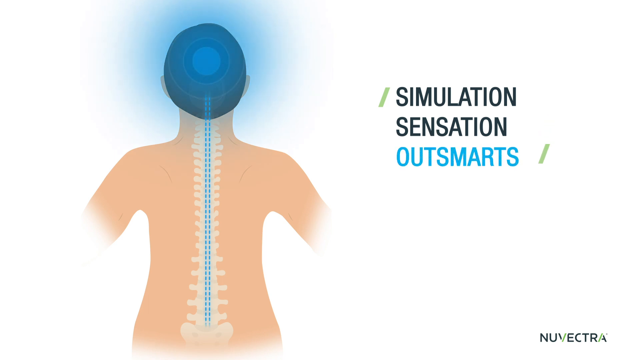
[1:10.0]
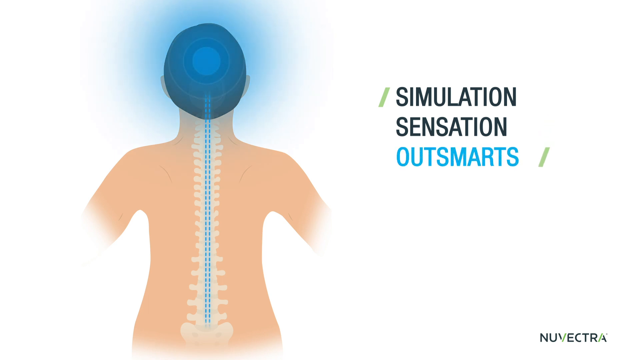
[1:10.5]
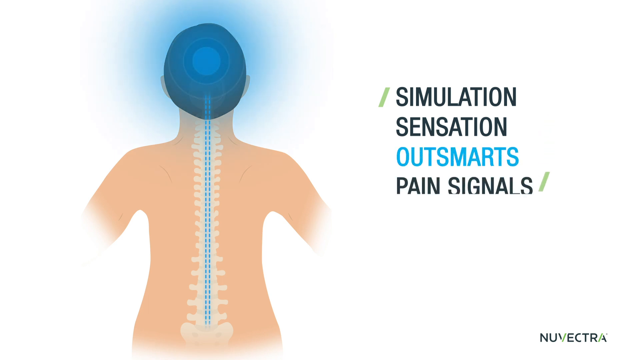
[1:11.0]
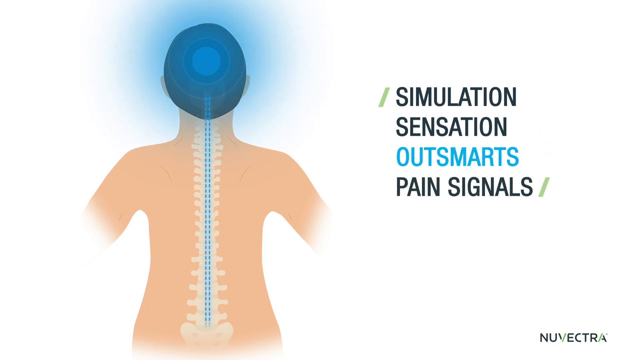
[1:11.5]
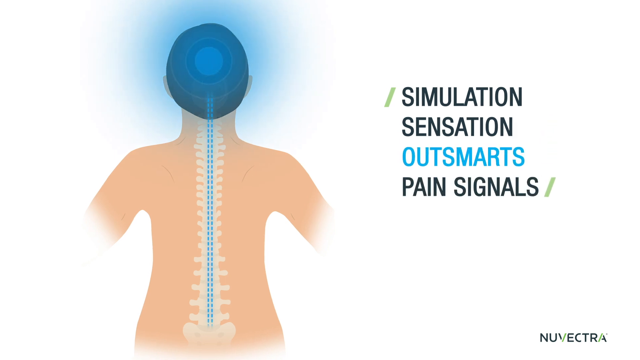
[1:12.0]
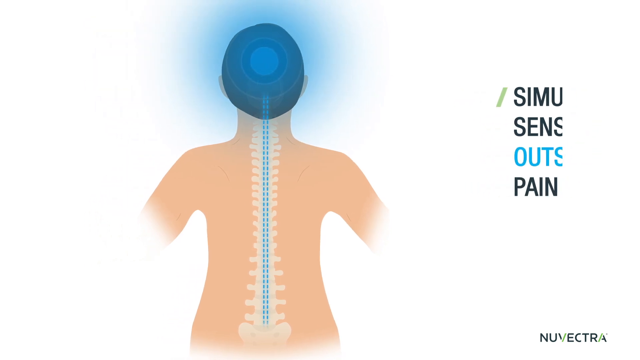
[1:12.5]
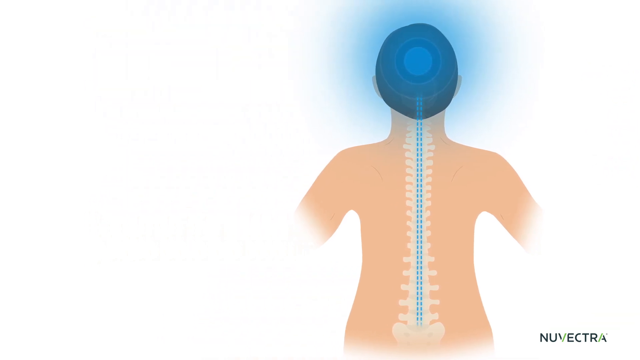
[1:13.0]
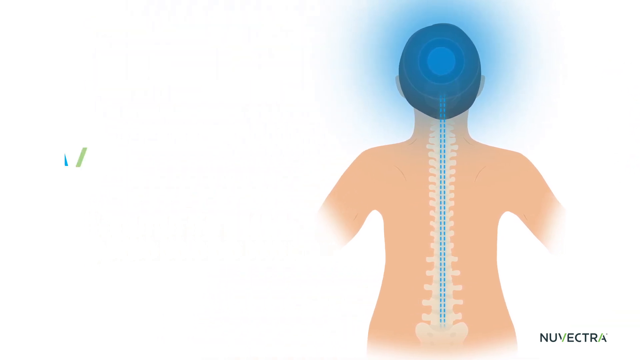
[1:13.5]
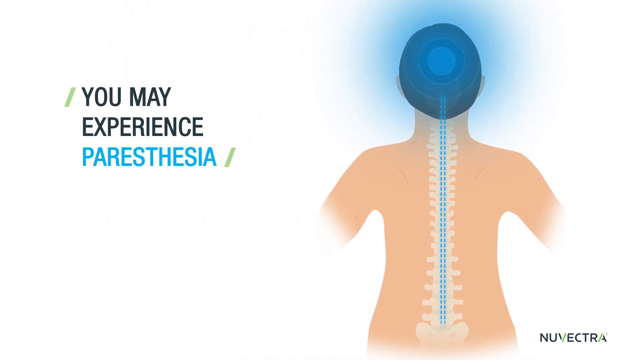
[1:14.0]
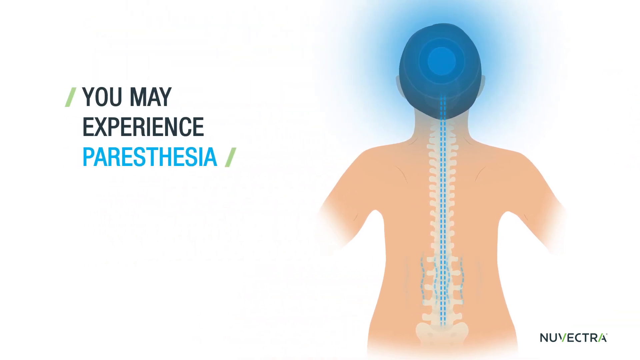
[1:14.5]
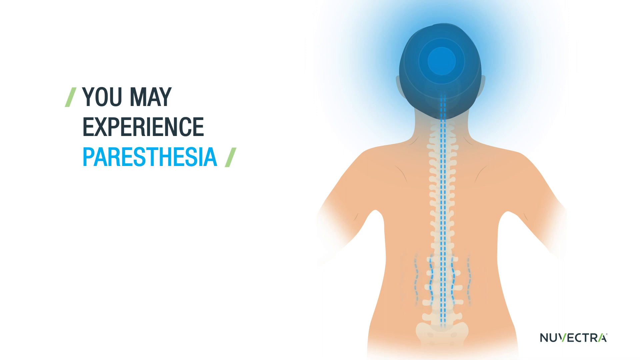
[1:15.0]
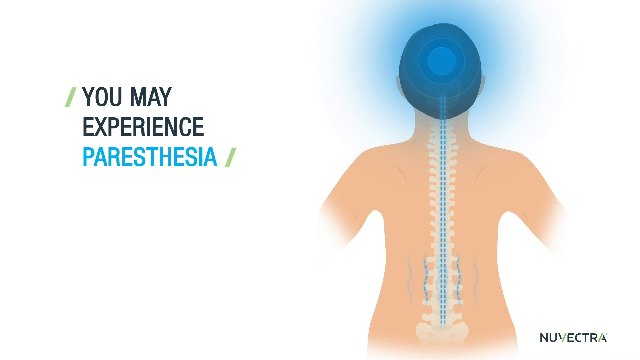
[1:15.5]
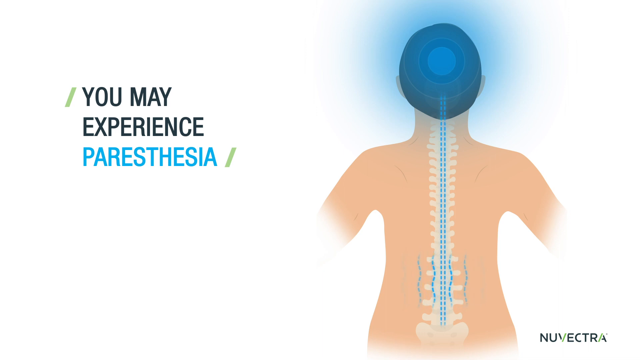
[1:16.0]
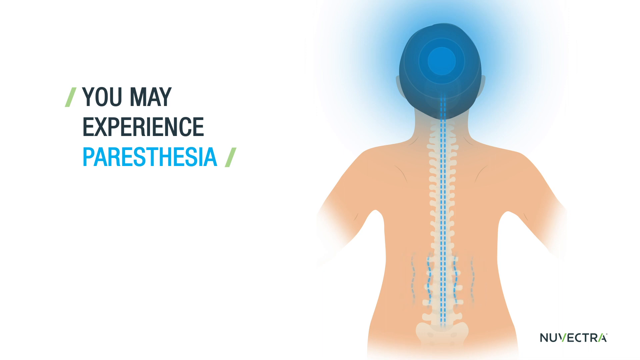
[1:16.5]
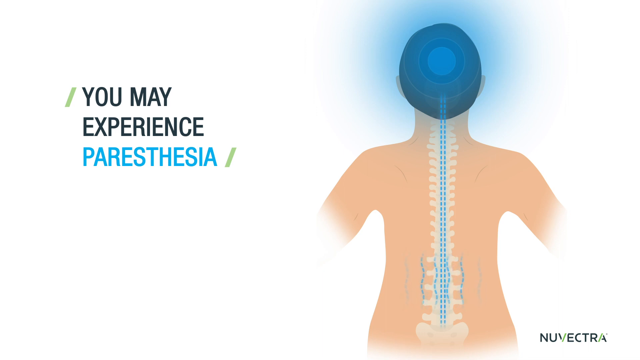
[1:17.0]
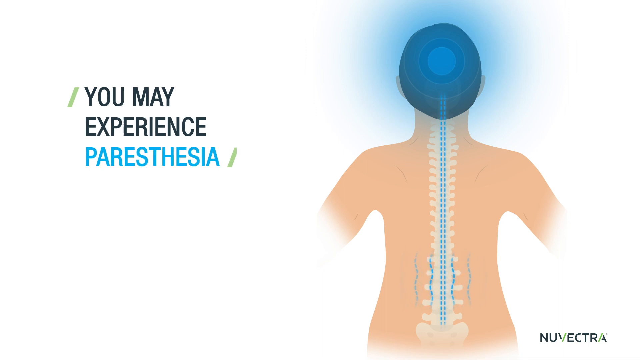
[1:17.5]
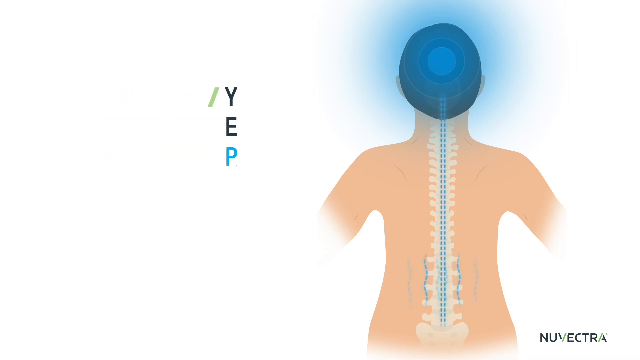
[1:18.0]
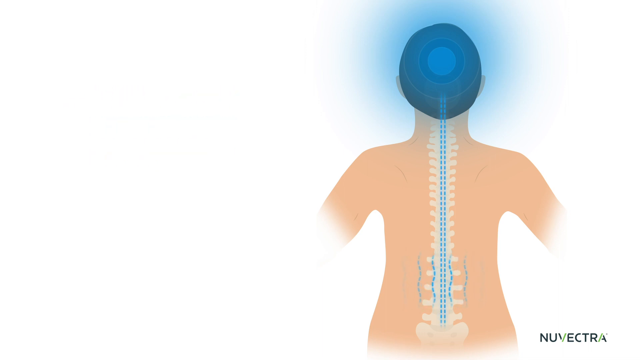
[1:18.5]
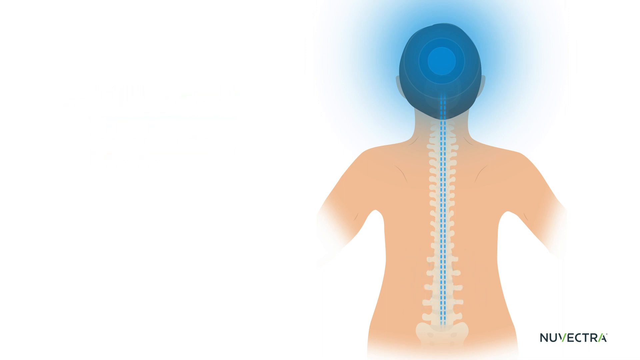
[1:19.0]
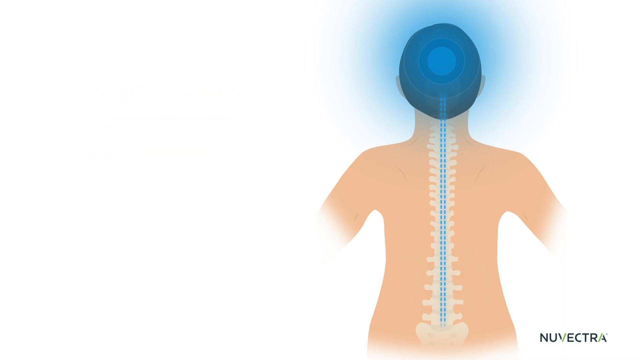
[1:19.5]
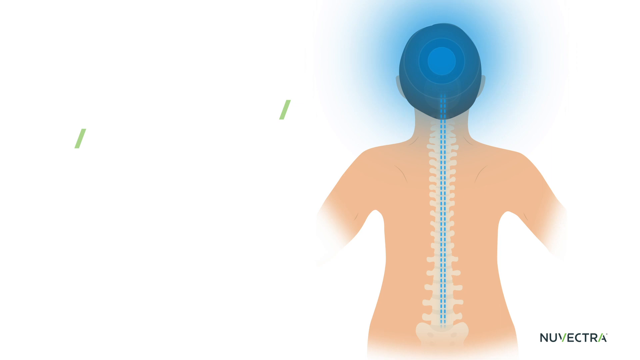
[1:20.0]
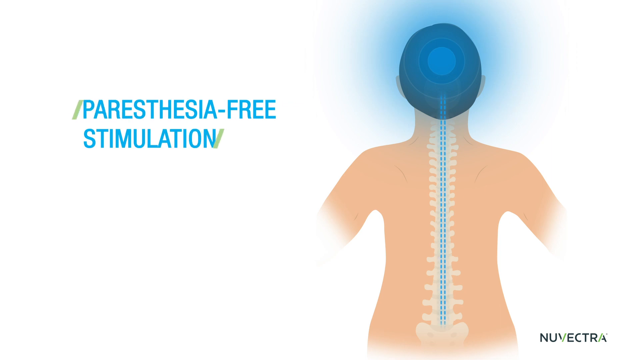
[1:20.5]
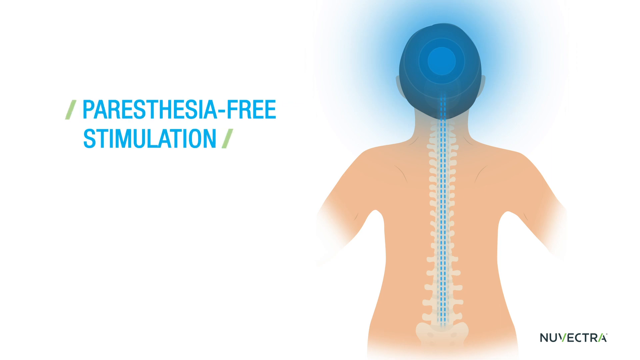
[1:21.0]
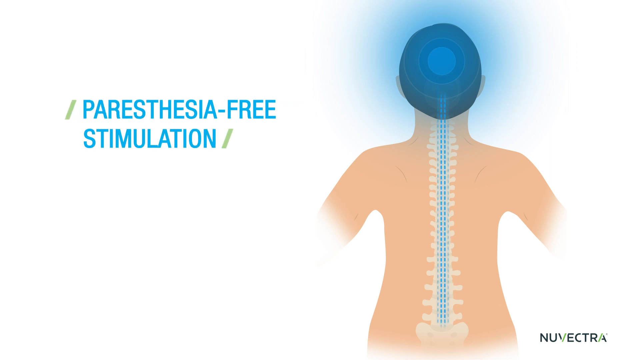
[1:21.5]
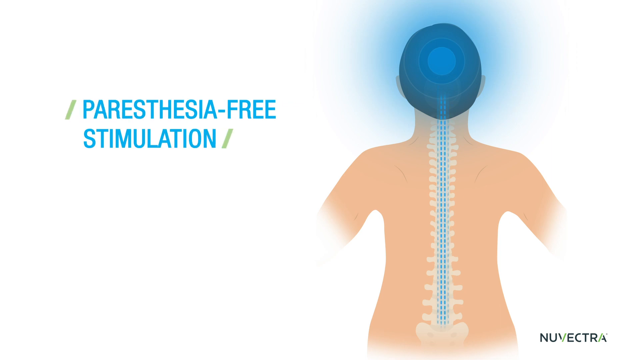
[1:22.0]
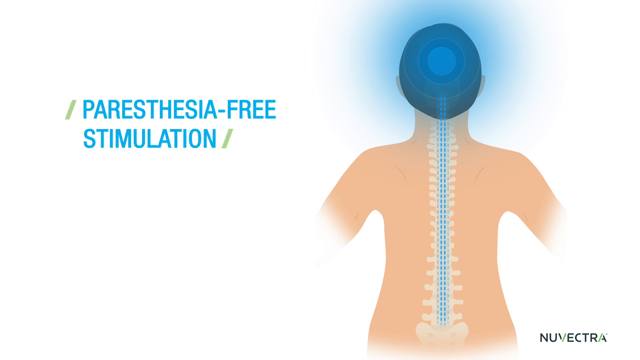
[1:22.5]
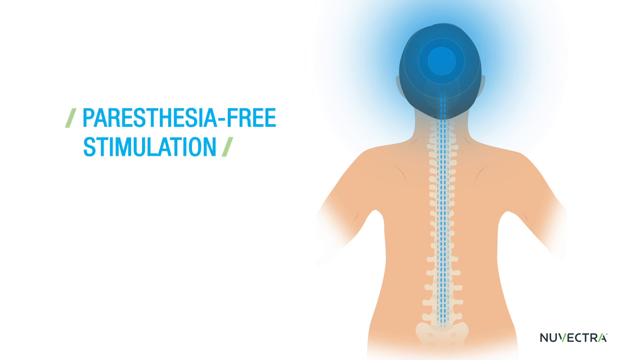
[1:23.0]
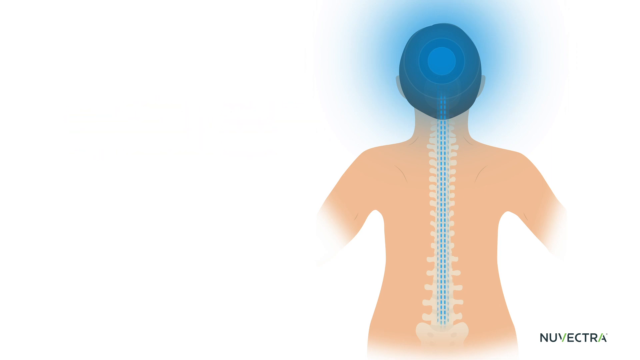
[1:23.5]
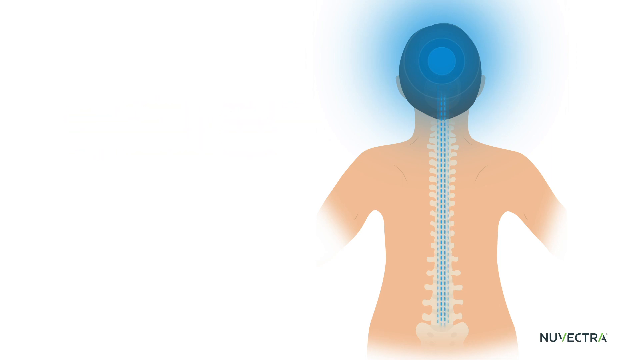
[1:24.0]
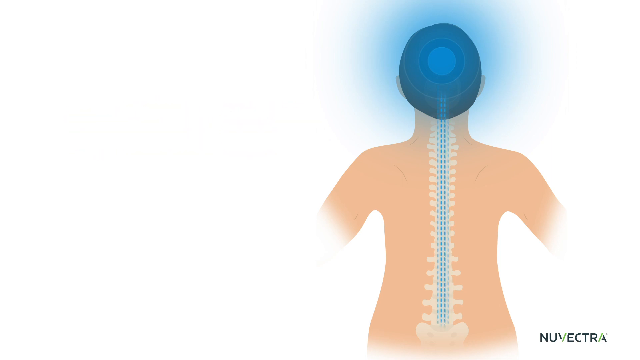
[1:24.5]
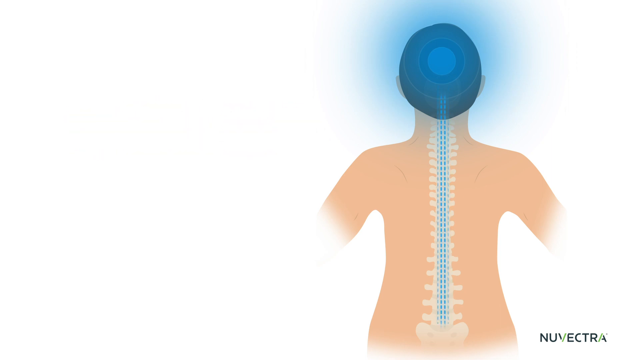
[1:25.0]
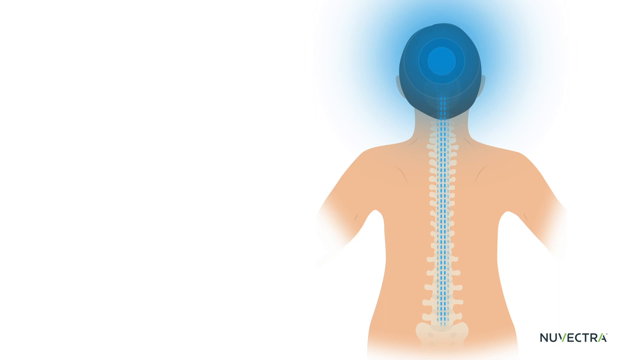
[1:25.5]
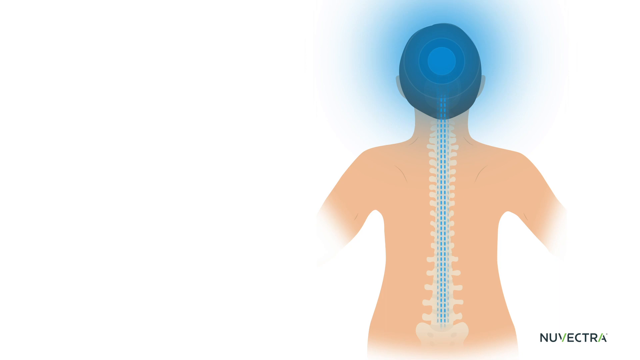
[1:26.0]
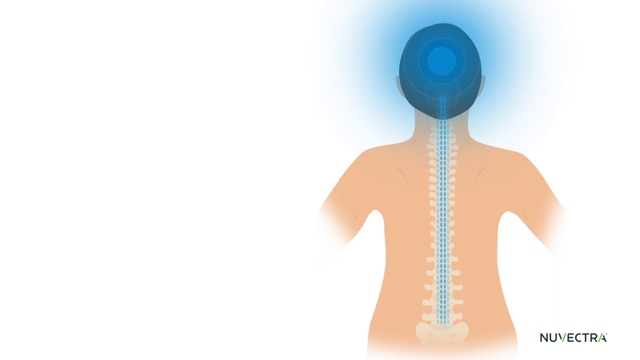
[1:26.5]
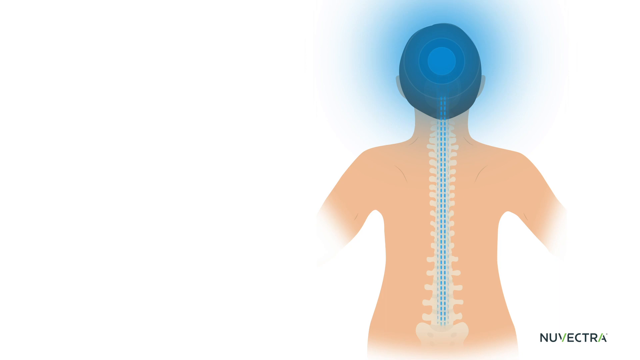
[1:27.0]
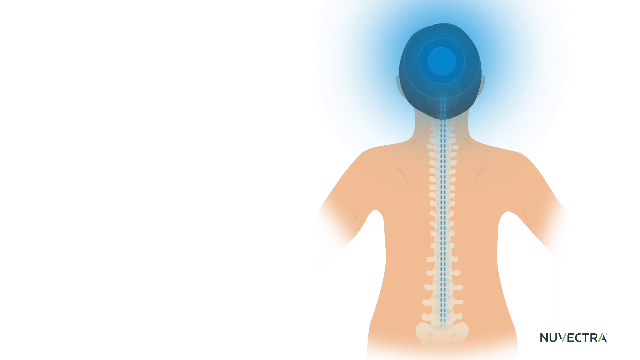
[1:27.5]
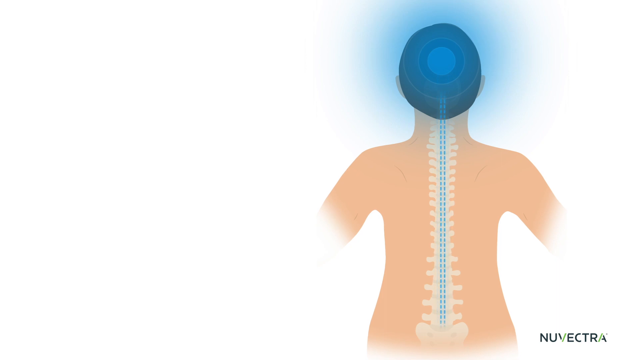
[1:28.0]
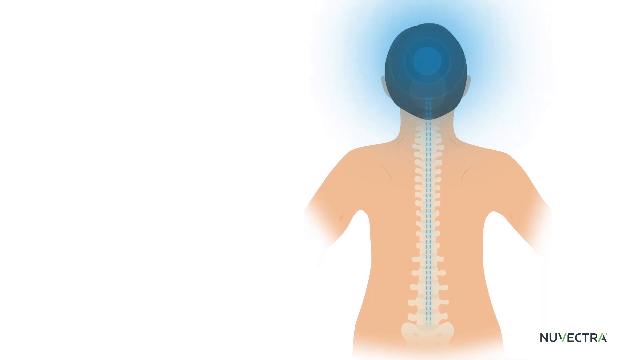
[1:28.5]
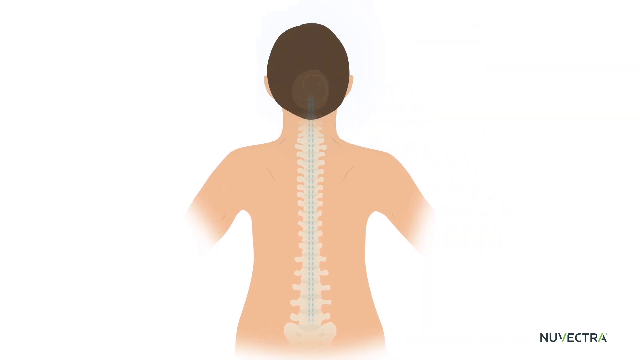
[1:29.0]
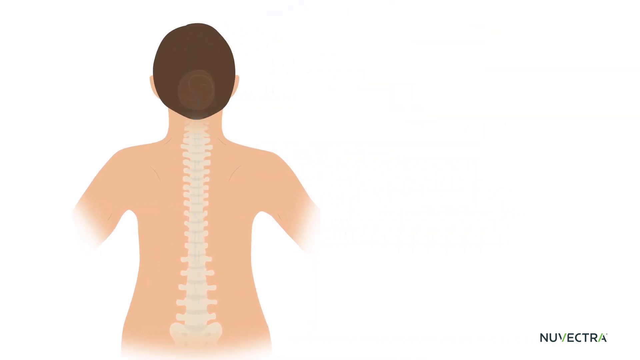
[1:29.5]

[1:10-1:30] The animated design continues, with text reading "Outsmarts" and then "pain simulation." On the left-hand side, text reads "you may experience paresthesia," while the animated diagram of the human back is on the right-hand side. Lines travel to the left and right of the person's back off the spine. That text disappears, and blue text reads "paresthesia-free simulation." On the right-hand side, the back of the person's head is still blue and the lines still travel upward, now with a light gray dotted line on the left and right of the two blue dotted lines in the center, which keep traveling up to the back of the head. The human diagram then moves to the left side of the screen as new text begins to appear.